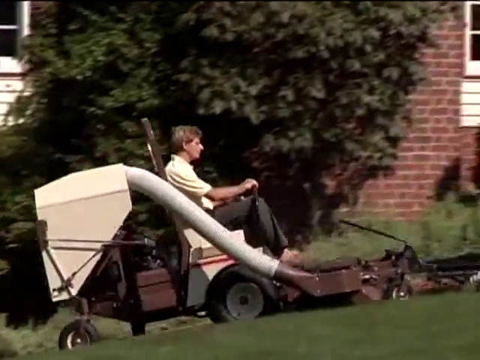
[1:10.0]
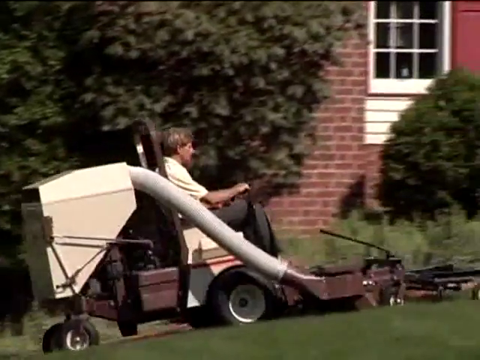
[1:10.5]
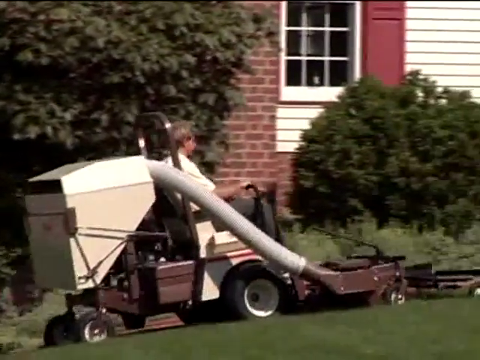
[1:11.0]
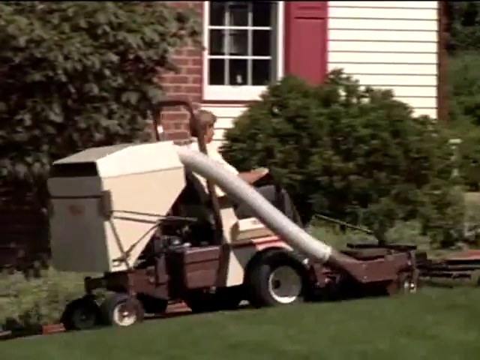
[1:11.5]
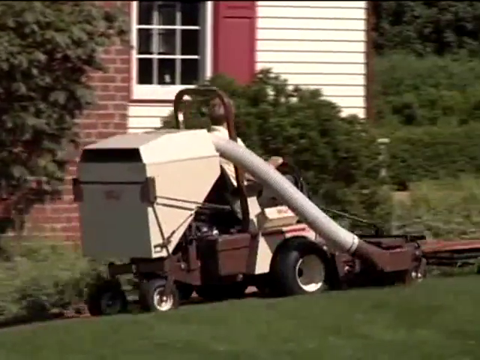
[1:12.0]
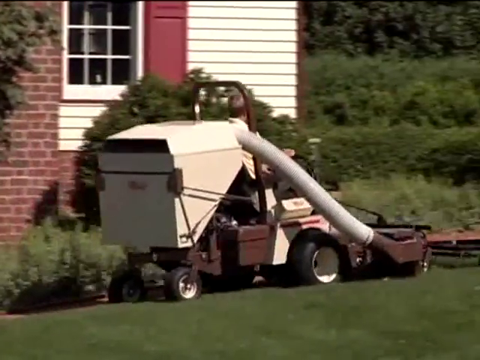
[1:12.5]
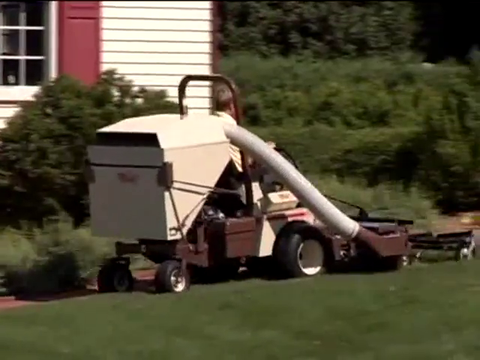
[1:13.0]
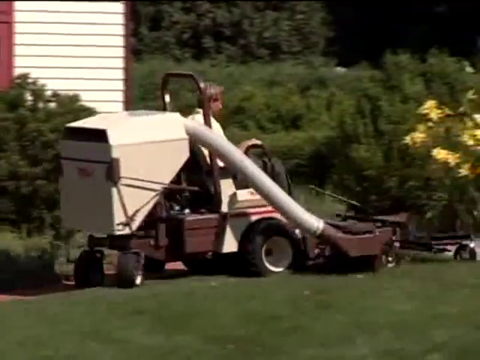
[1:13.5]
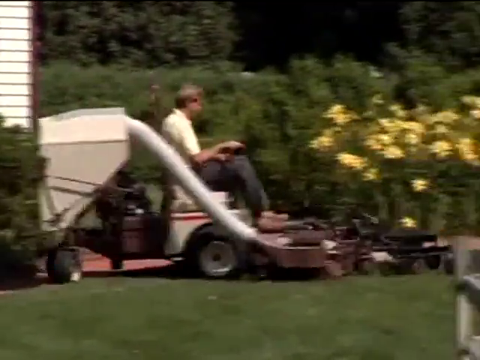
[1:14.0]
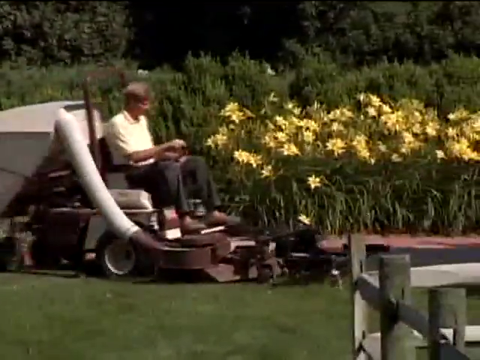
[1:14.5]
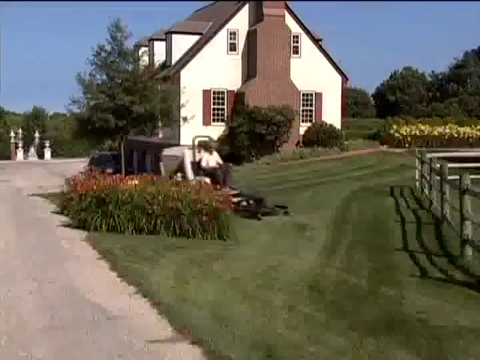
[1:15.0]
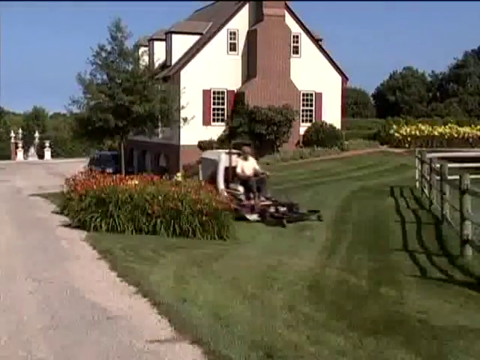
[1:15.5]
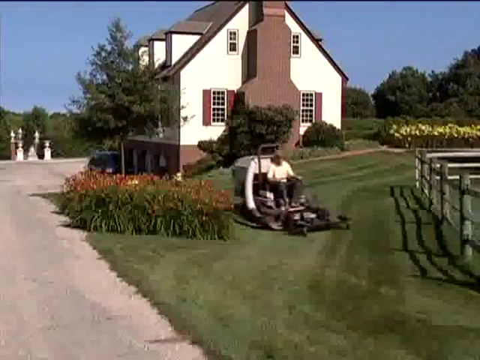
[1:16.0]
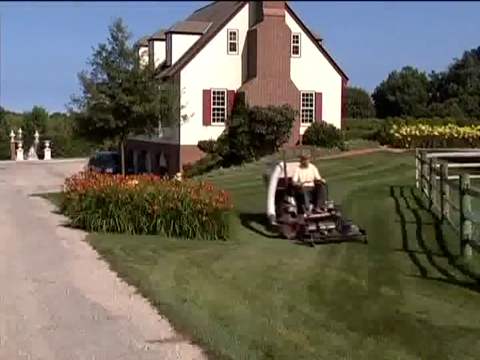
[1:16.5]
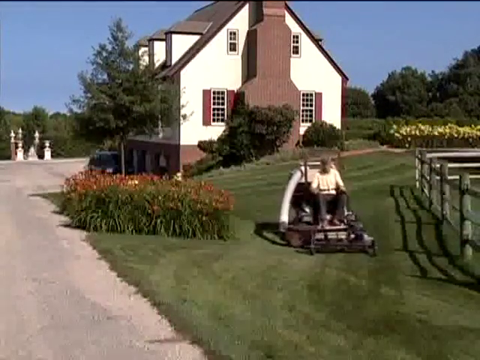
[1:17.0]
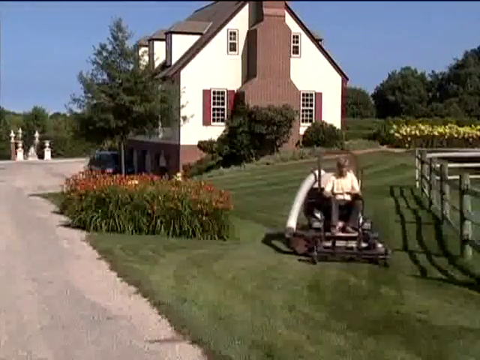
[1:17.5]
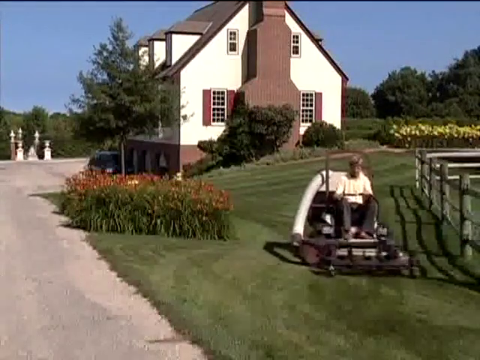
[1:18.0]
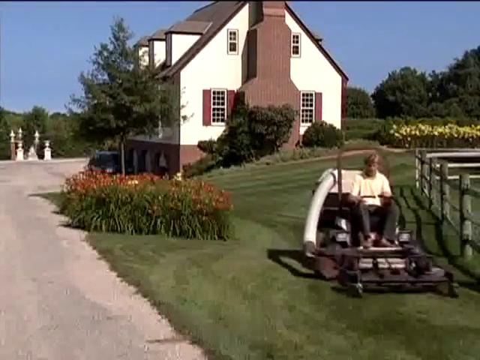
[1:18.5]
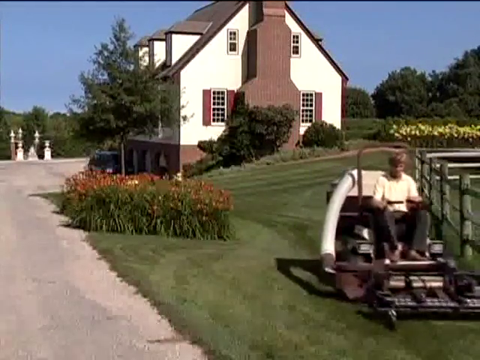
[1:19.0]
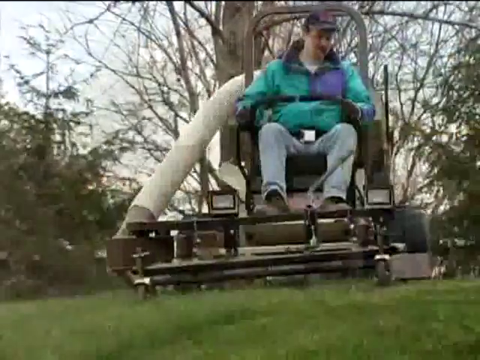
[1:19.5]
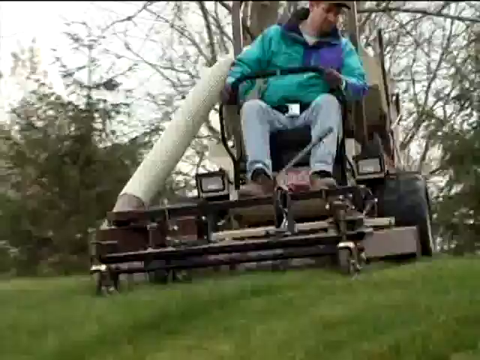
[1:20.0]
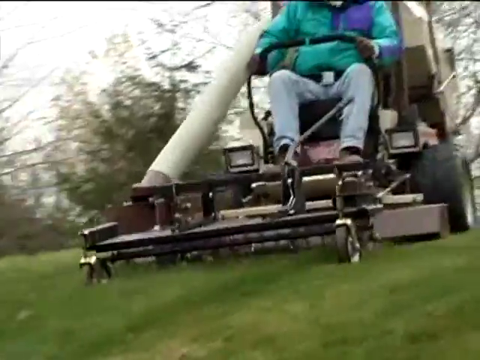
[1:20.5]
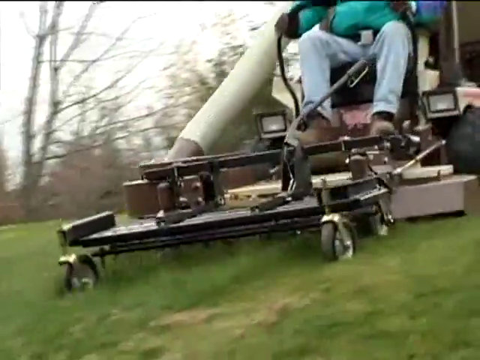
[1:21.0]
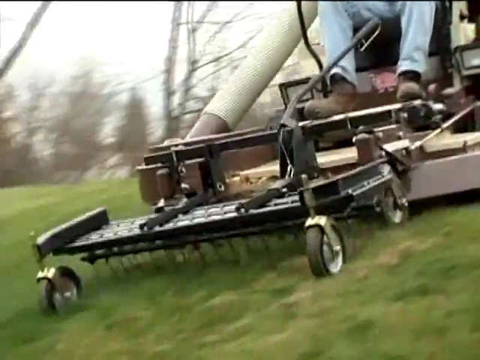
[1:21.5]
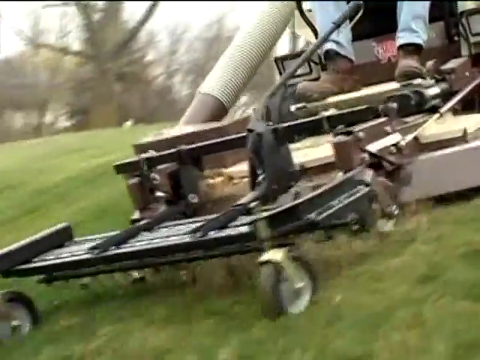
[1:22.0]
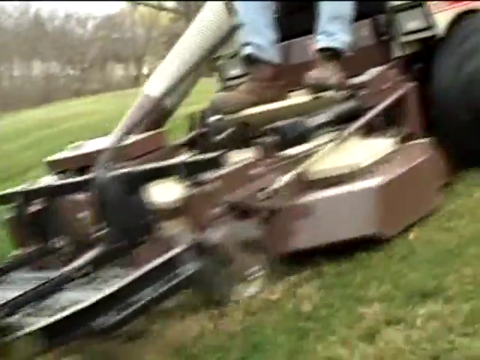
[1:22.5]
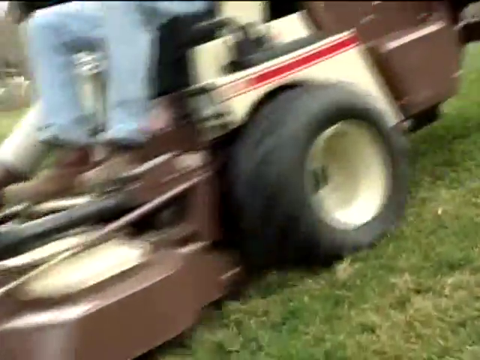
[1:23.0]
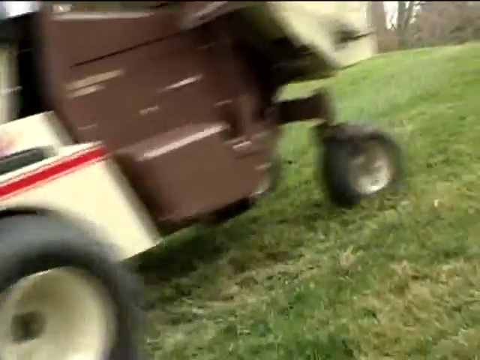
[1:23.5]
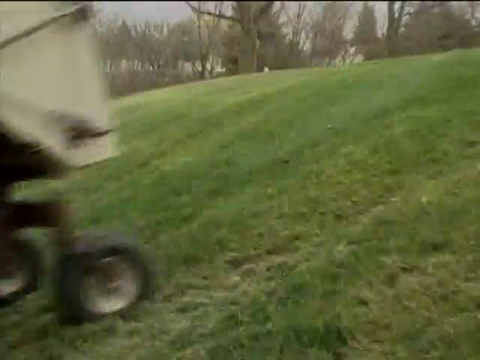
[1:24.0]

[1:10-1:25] Different people ride the lawnmower; one person is now on the right side of the church, where there is grass. Flowers are planted on the right side of the church, and he mows the grass, removing the dead grass and leaves that have accumulated on the ground. The front part of the deck is flexible, and the pipe is flexible and stretchable rather than fixed.